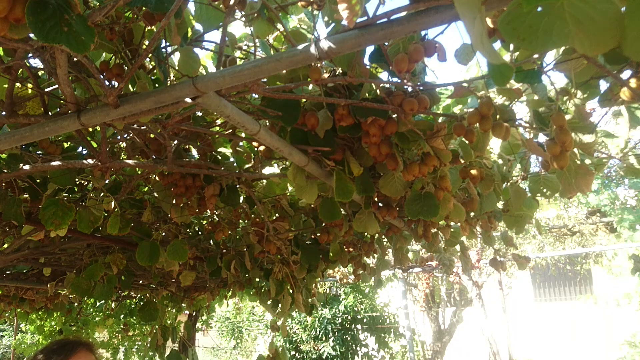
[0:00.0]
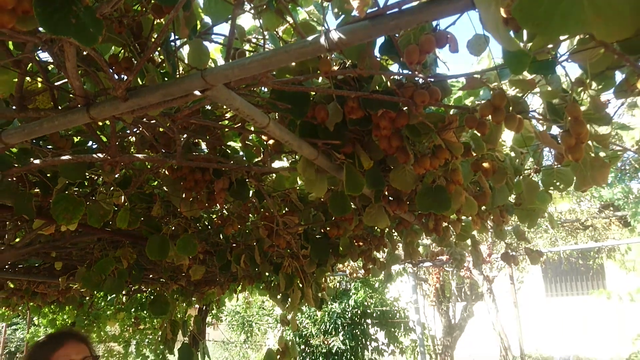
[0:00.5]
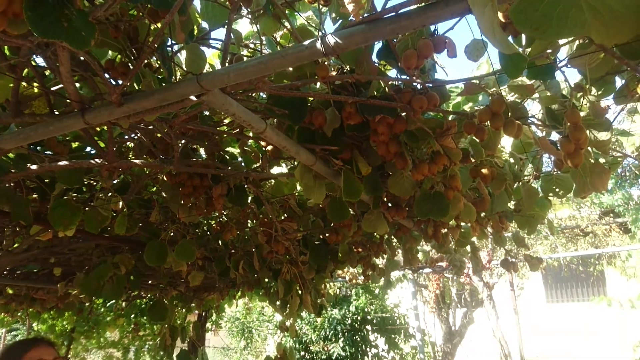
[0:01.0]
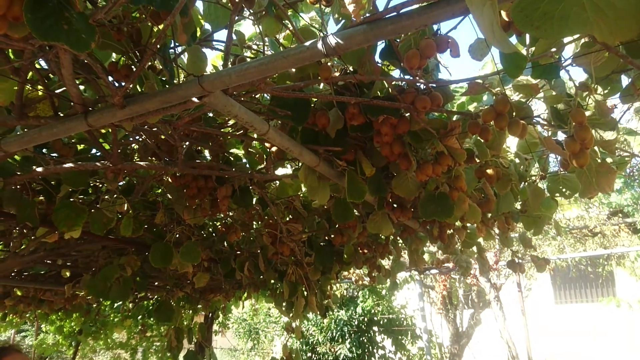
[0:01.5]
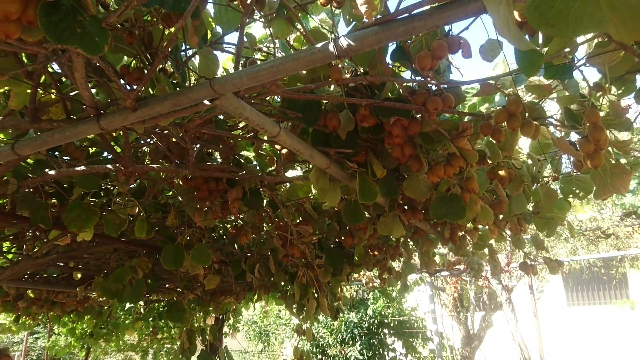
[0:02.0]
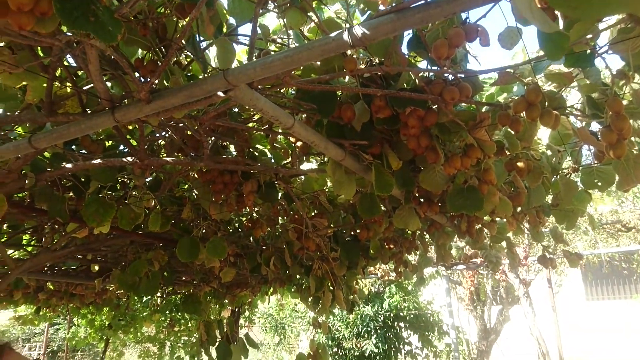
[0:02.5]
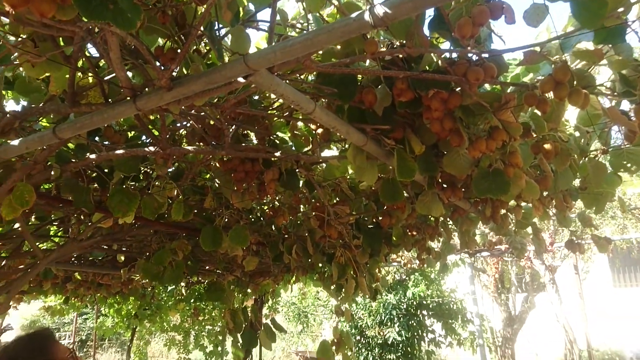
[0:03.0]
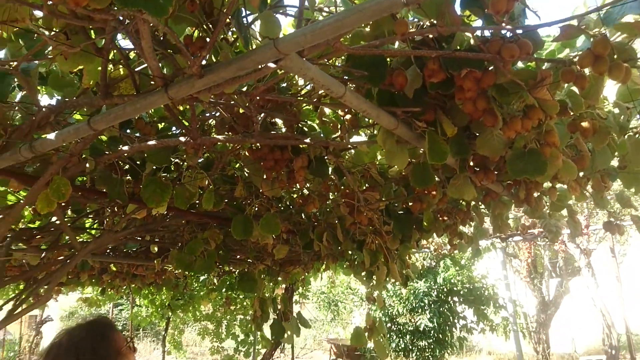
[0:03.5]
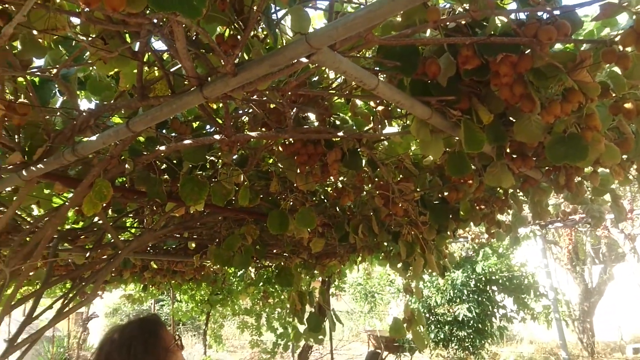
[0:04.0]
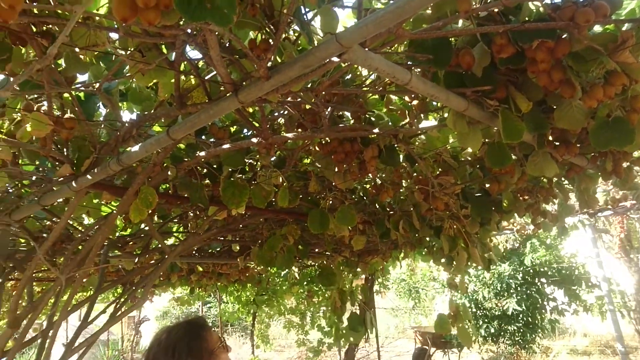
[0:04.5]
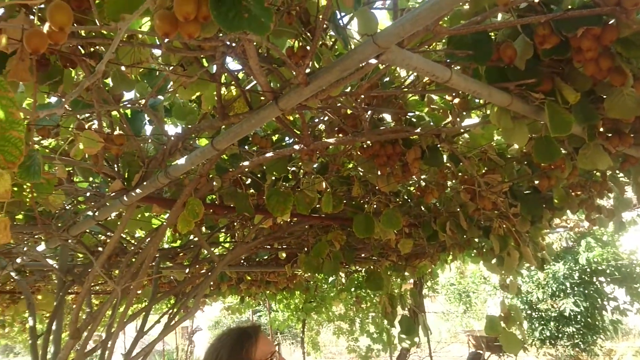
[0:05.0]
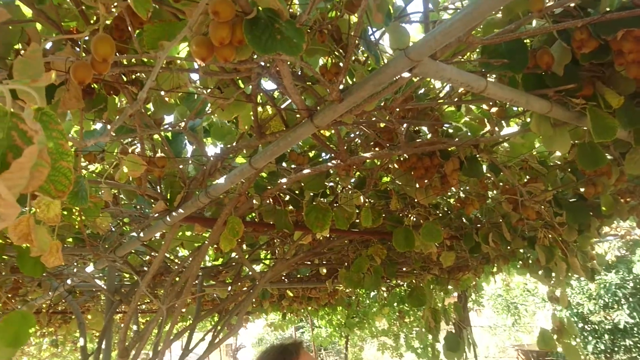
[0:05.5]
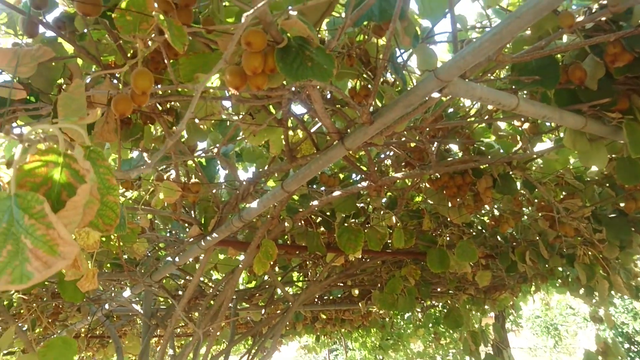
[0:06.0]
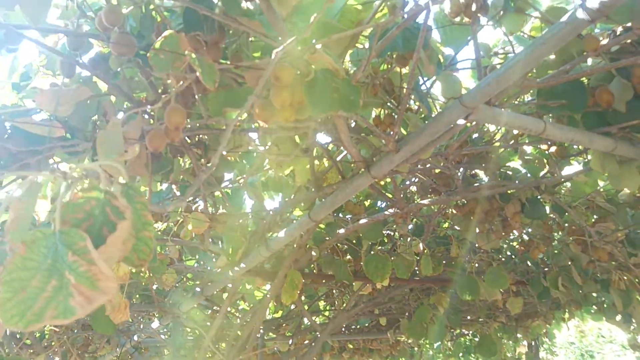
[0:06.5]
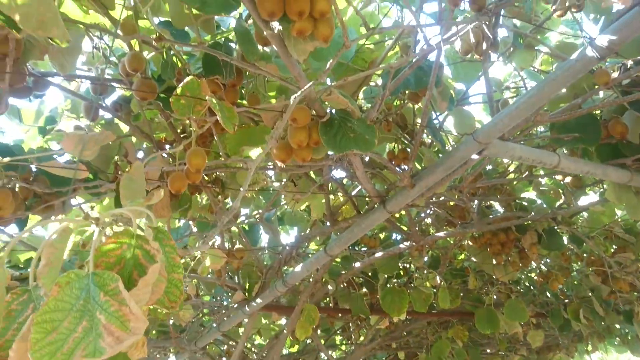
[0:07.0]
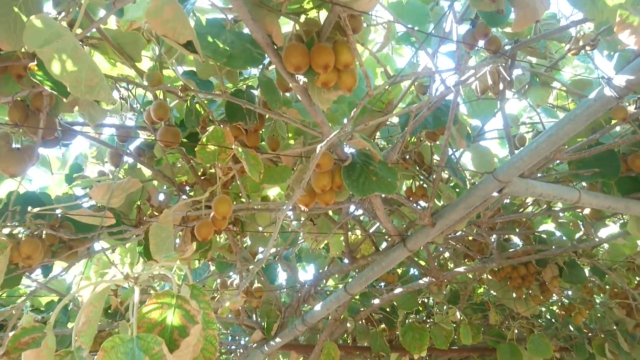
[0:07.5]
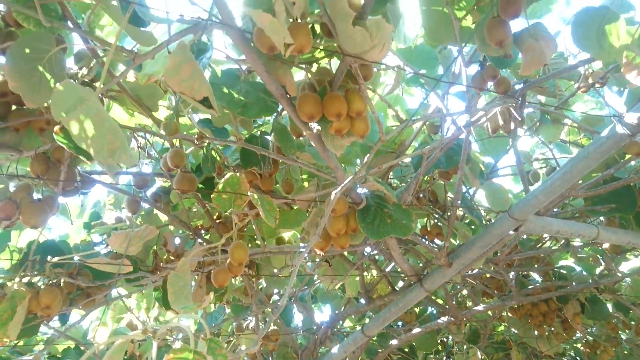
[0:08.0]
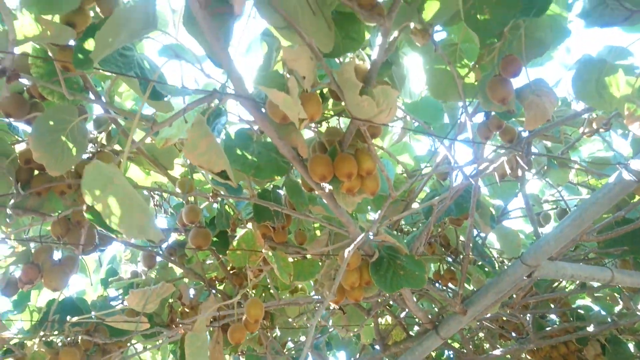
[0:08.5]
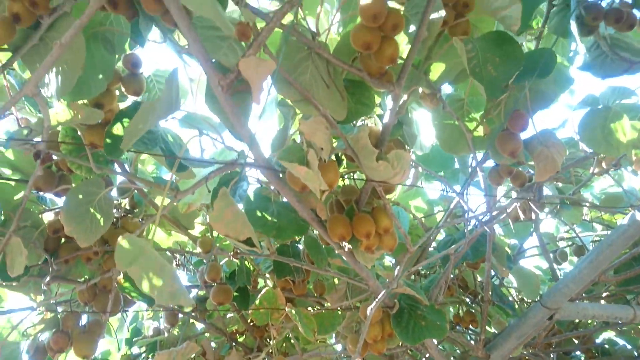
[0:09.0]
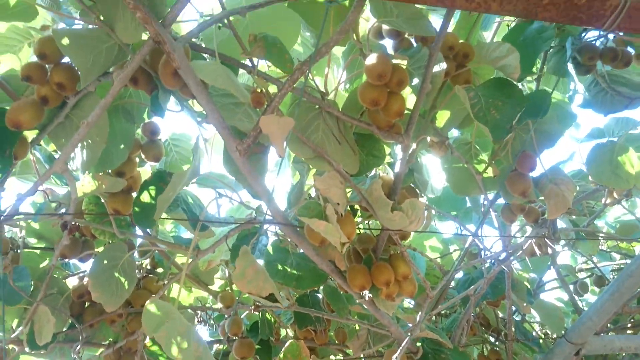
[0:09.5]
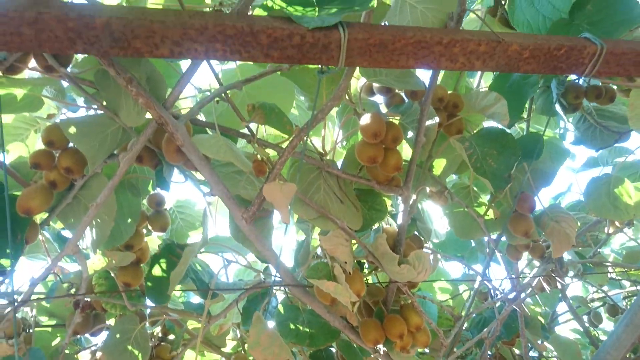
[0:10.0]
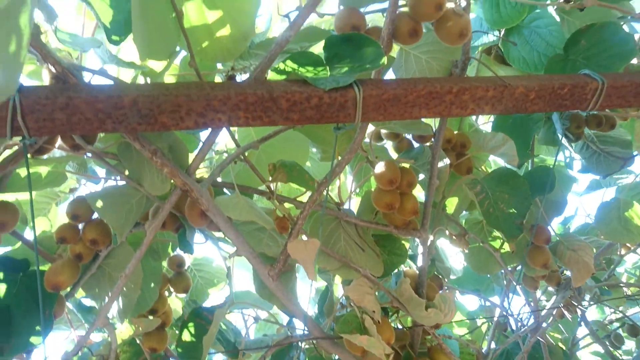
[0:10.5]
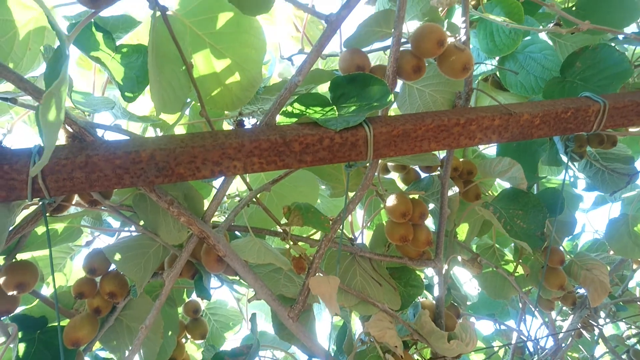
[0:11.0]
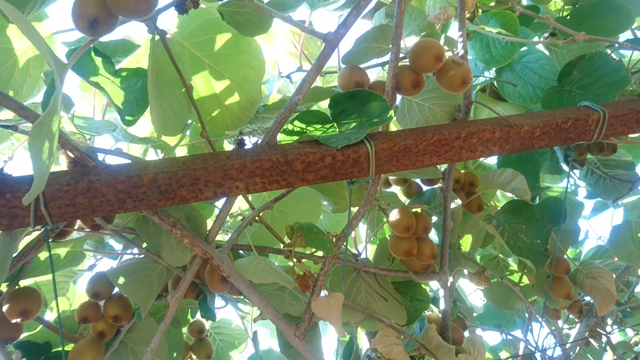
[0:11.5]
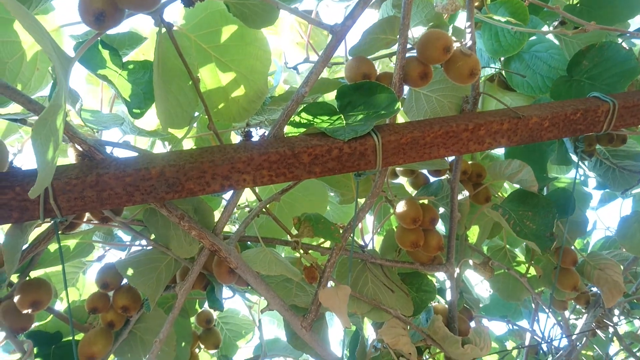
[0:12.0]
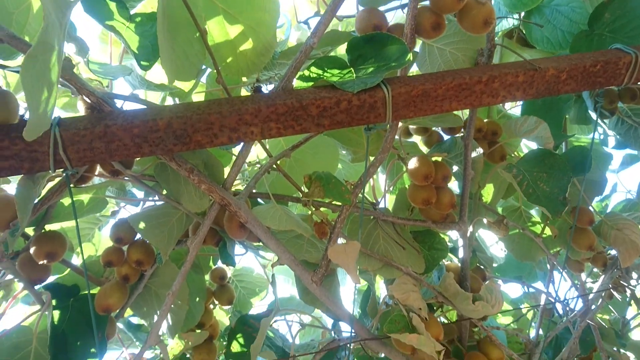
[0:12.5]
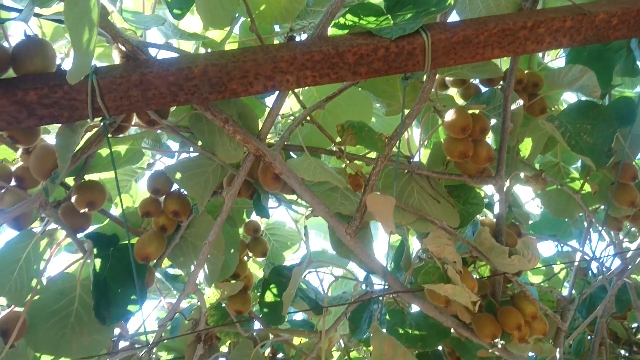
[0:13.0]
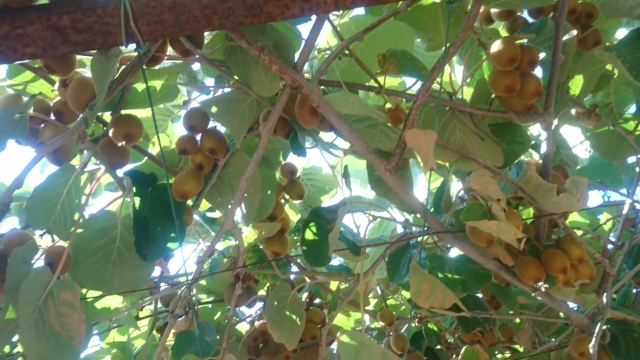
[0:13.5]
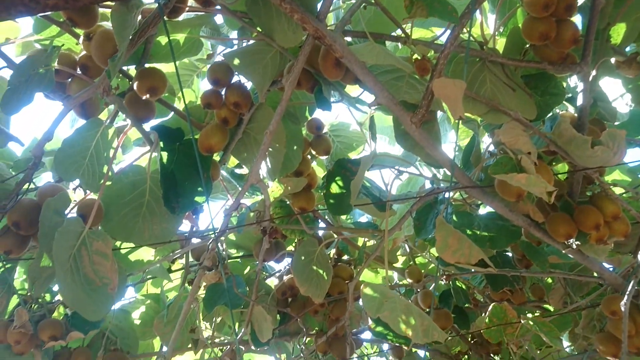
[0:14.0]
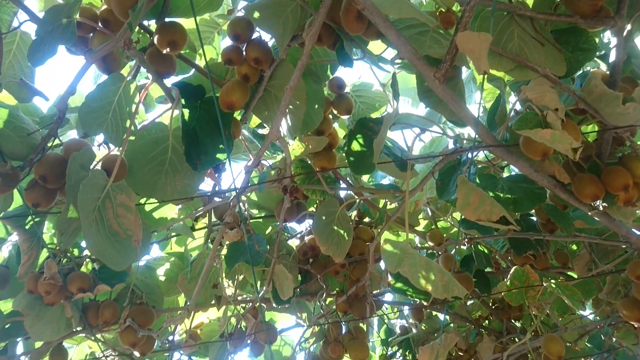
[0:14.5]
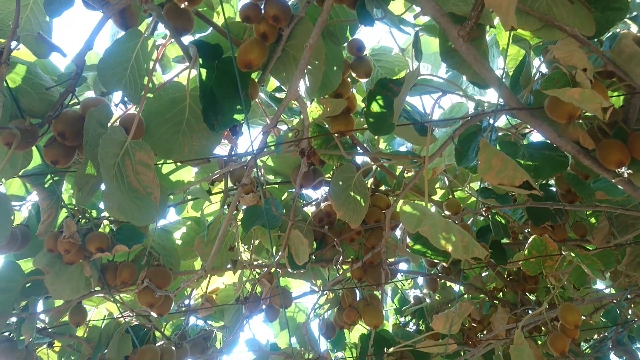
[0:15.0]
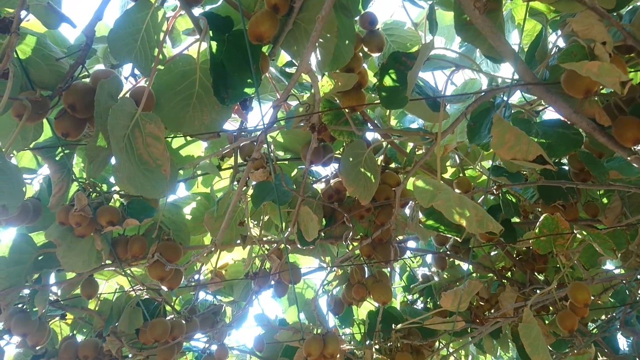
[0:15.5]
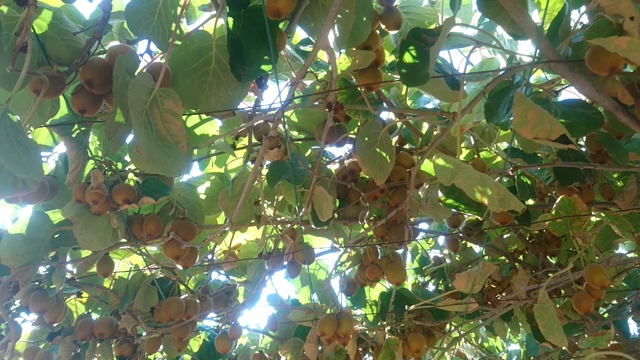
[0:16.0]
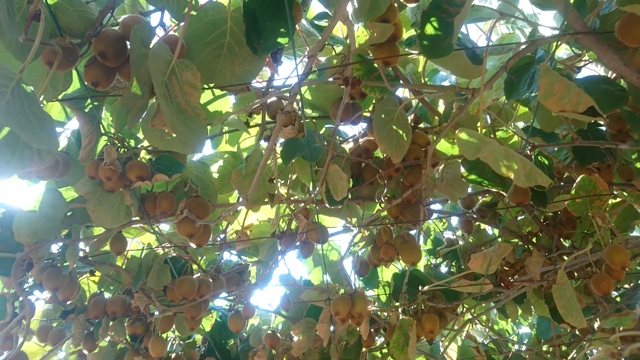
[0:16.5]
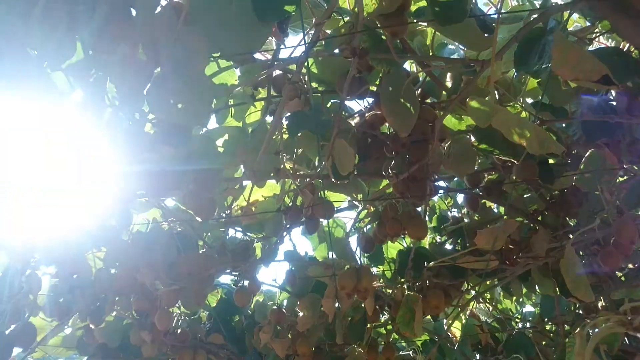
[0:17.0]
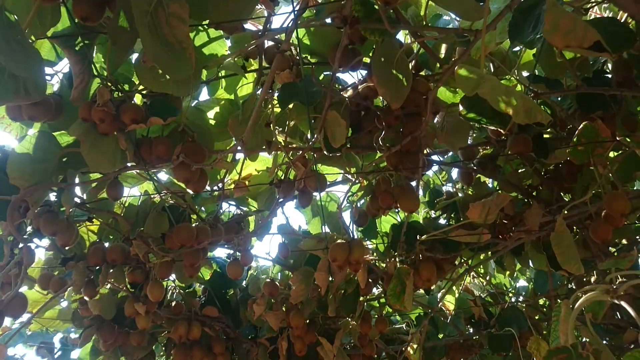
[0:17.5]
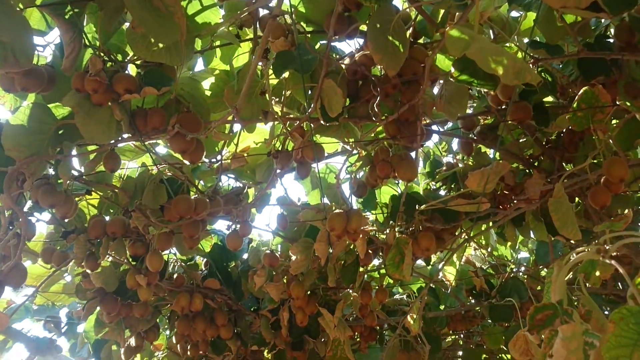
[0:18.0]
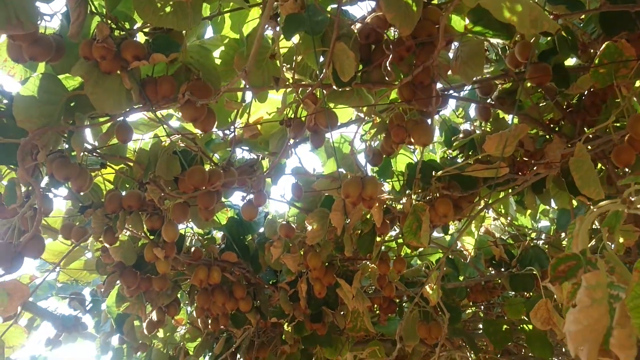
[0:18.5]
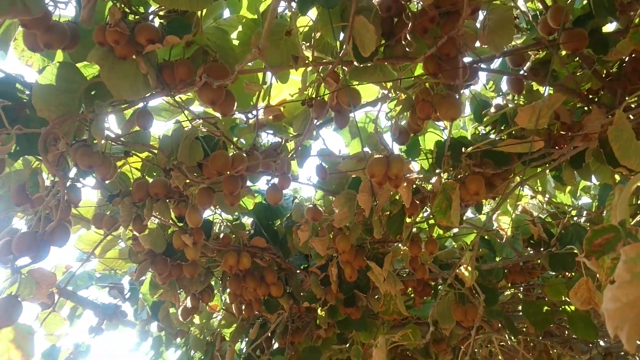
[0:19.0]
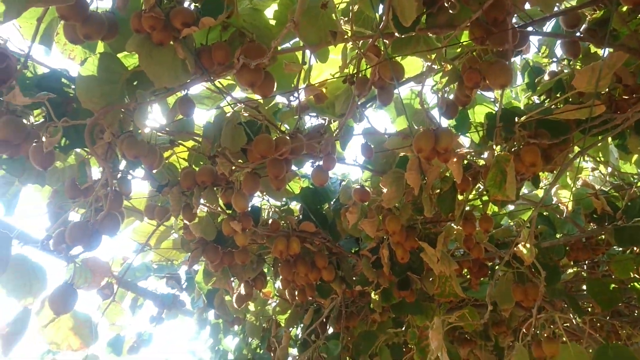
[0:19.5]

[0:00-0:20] A very large tree or plant is growing, supported by what looks like some sort of bamboo or wire system. The tree has a number of fruits that look like apricots; they are round and light brown. Many green leaves are dangling, moving softly as the wind pushes them around slightly. Someone's head is visible at the bottom of the frame, looking upward at the hanging fruits. The blue sky is visible, and there is a lot of light as the sun is out; it is daytime. Many of the fruits are hanging, and in some areas they almost appear to be in bundles, though they are spread out throughout the tree.